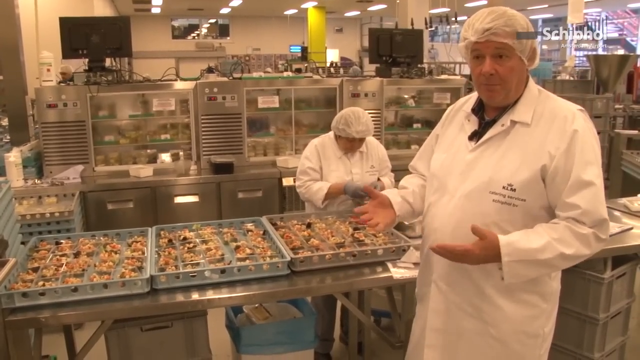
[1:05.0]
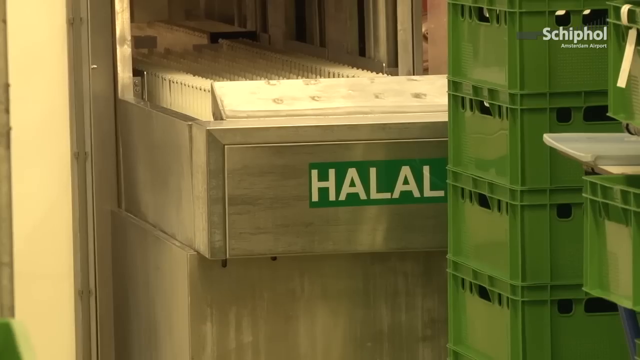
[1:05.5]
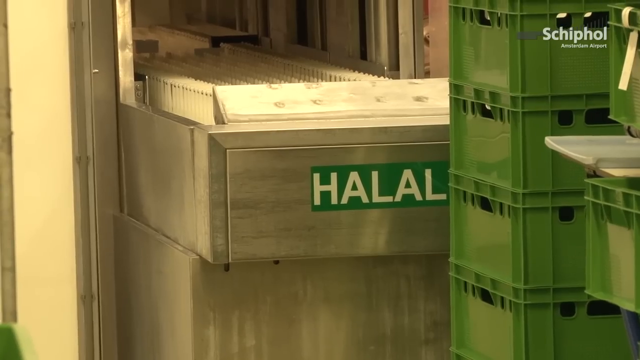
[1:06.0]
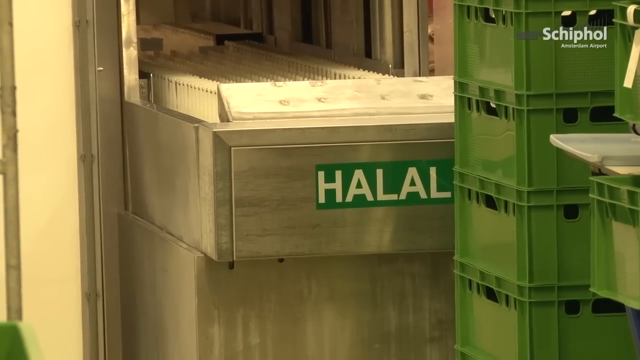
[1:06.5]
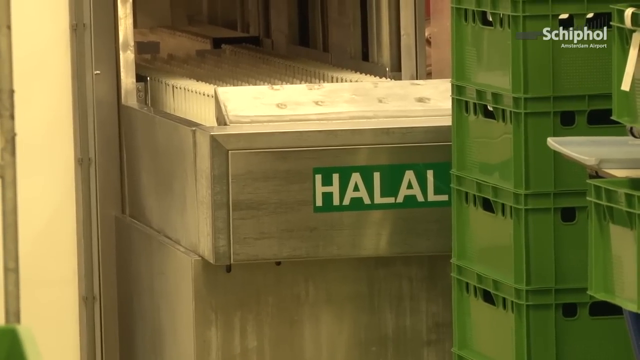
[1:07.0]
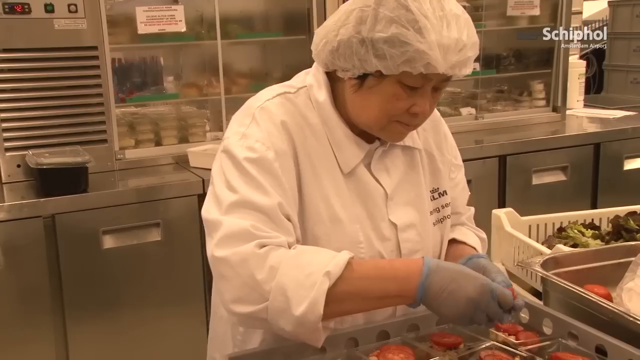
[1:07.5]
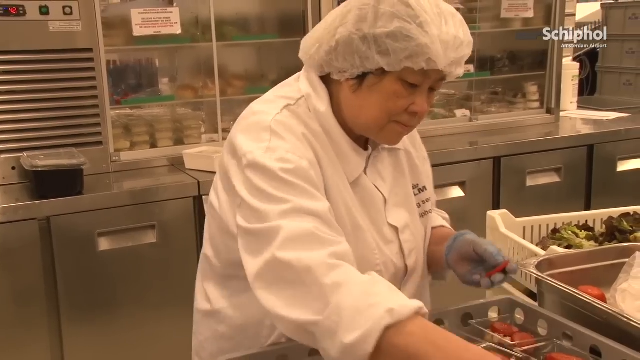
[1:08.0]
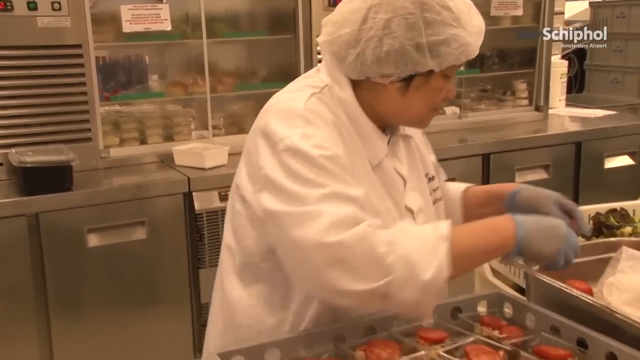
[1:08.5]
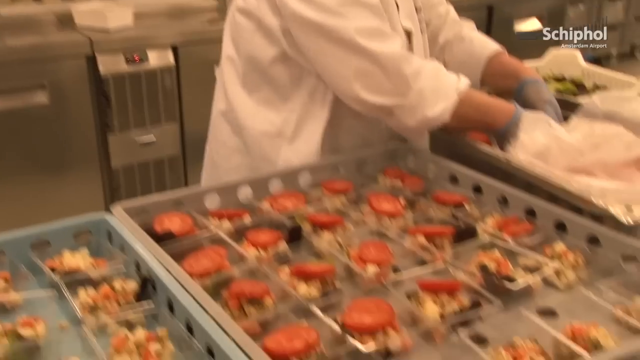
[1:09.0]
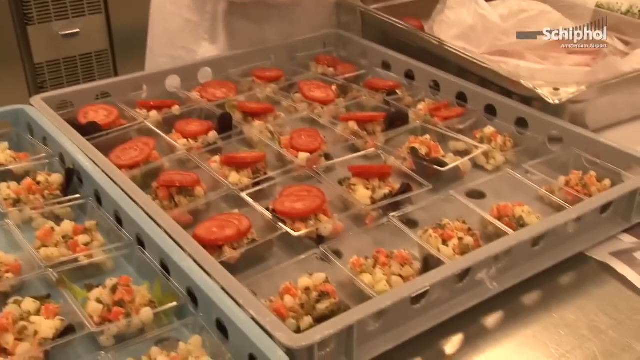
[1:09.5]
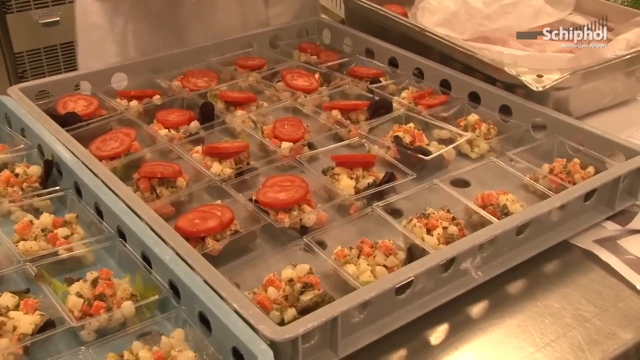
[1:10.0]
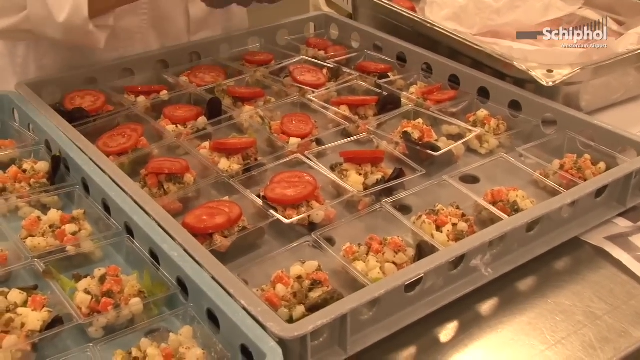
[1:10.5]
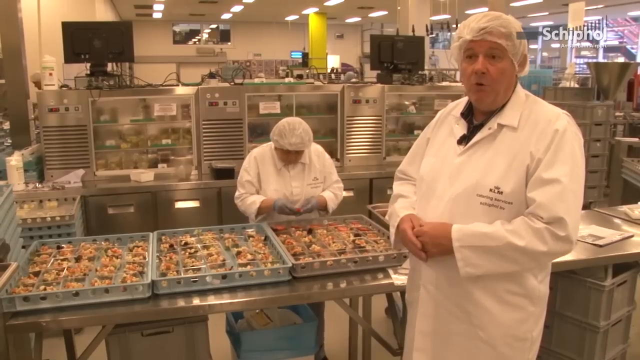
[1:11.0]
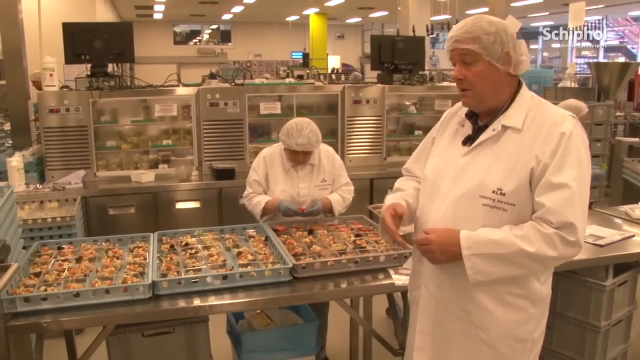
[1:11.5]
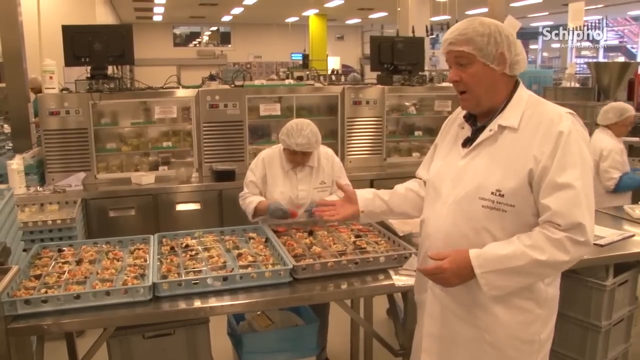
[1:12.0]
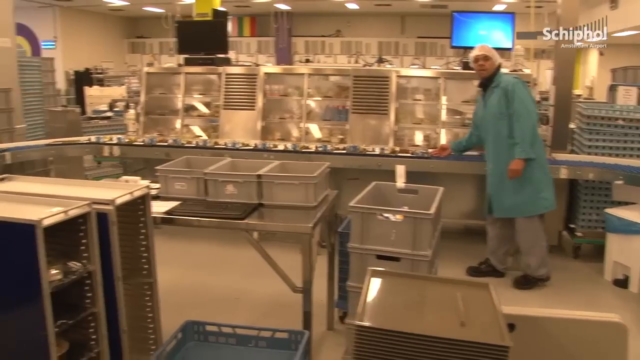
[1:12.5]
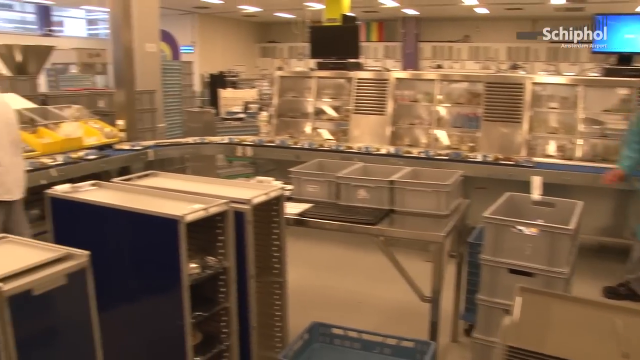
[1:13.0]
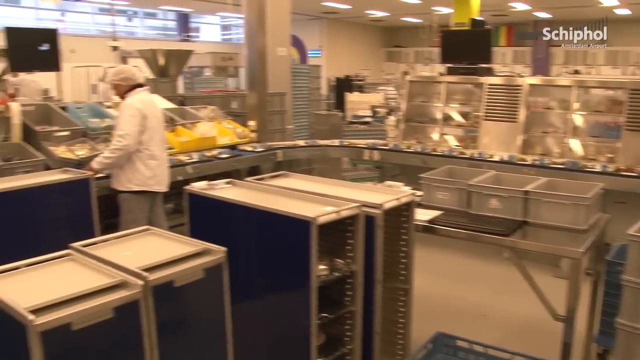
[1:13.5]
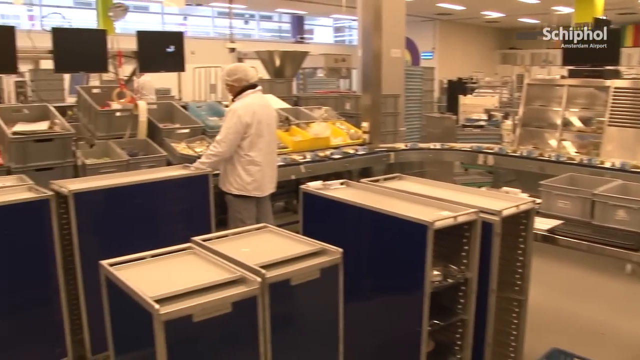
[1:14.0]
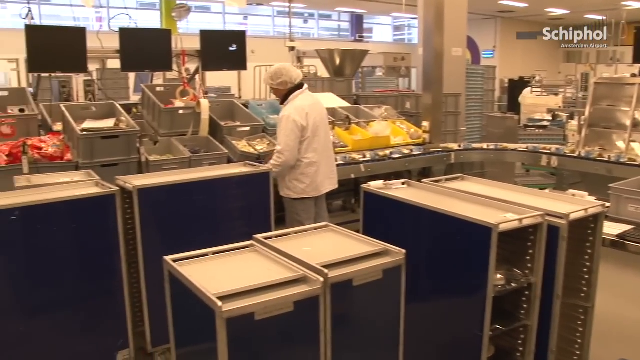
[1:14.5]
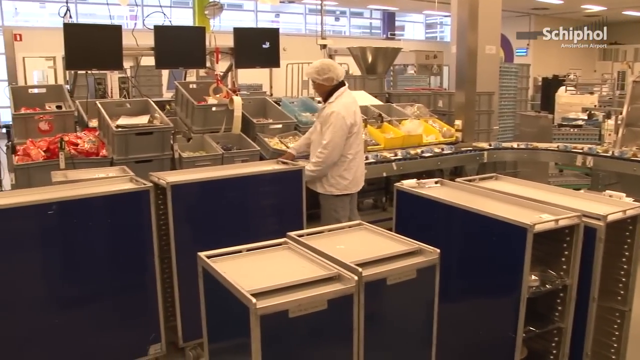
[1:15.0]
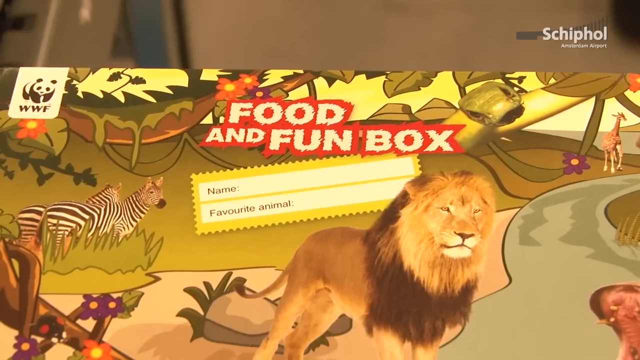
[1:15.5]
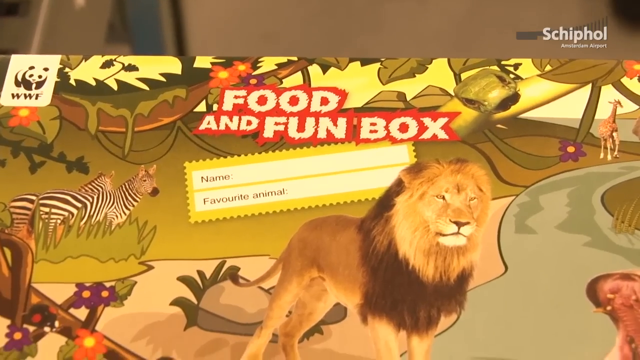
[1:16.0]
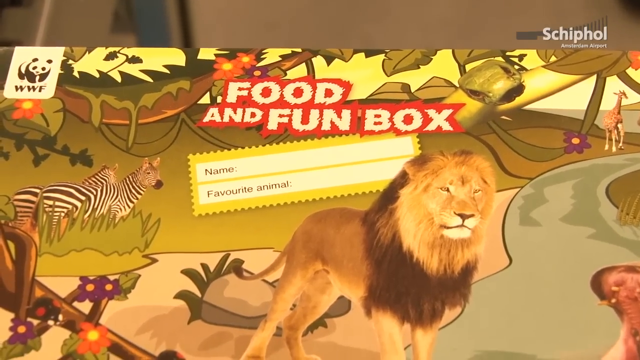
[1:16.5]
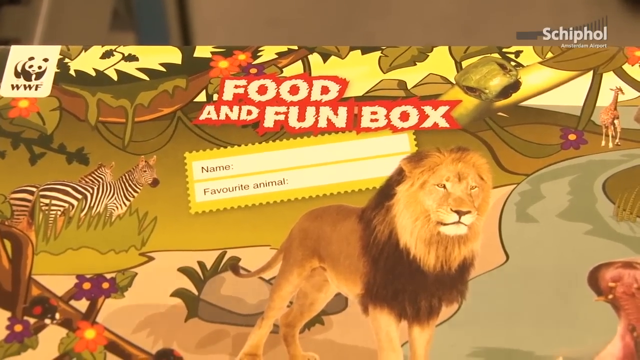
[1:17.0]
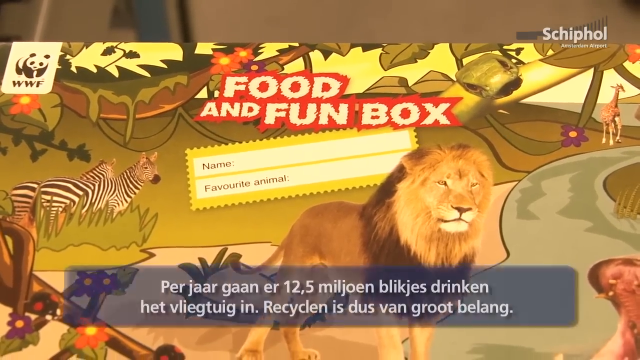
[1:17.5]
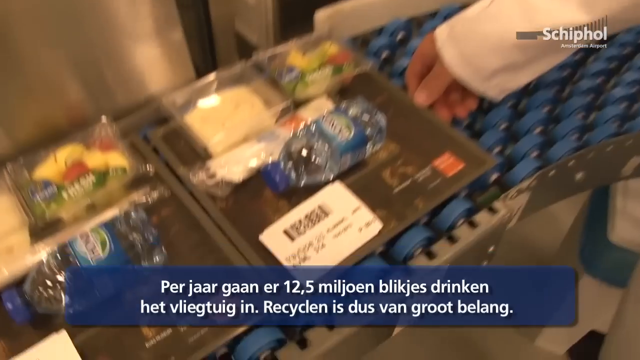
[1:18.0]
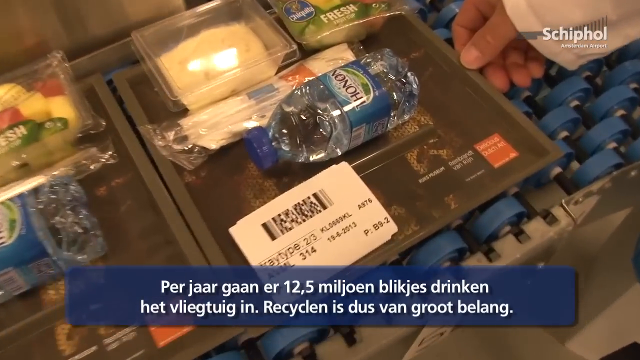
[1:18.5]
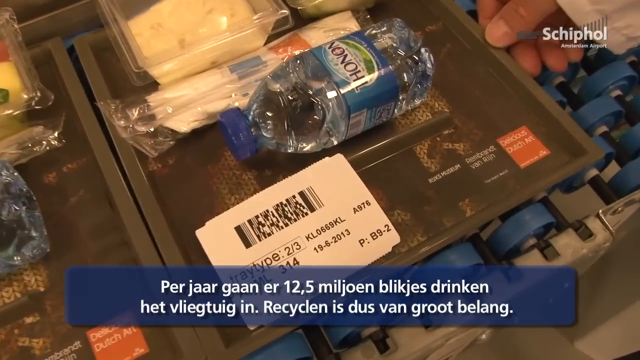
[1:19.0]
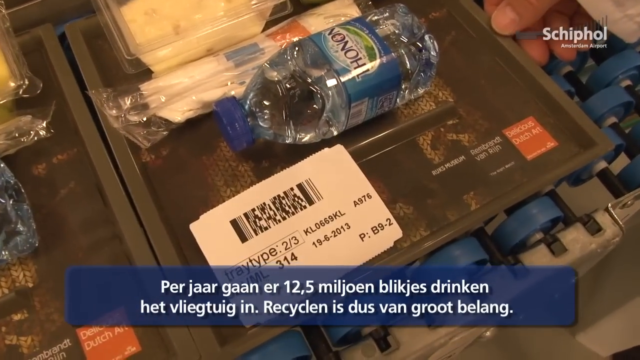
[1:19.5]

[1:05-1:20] In the commercial kitchen at the airport, the head chef points to trays of food. Another scene shows what is perhaps a piece of machinery with "halal" on it in white letters on a green background. A chef makes what looks like salad or sandwiches in small plastic containers that are in a large plastic tray. The man is shown talking, and then a large conveyor belt carries trays of food being pushed along it. There is an image of a food and fun box with animal illustrations on it, followed by a very quick shot of what possibly looks like a specific order for a customer, with what may be a magazine, a label, a bottle of water and some food items.